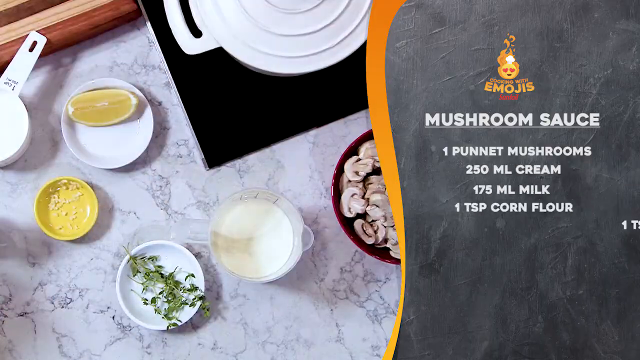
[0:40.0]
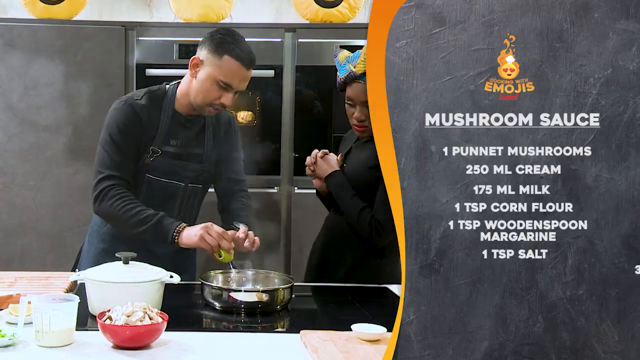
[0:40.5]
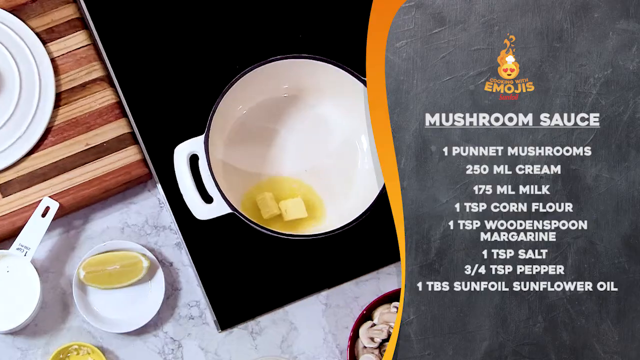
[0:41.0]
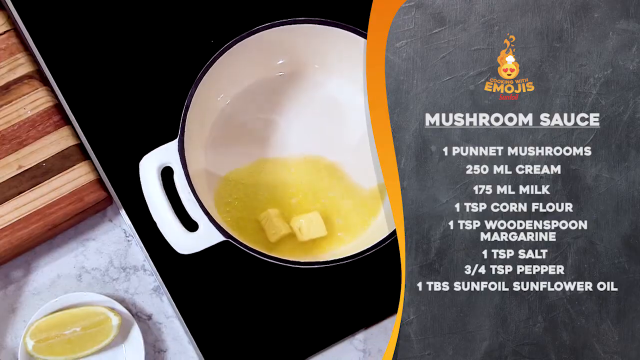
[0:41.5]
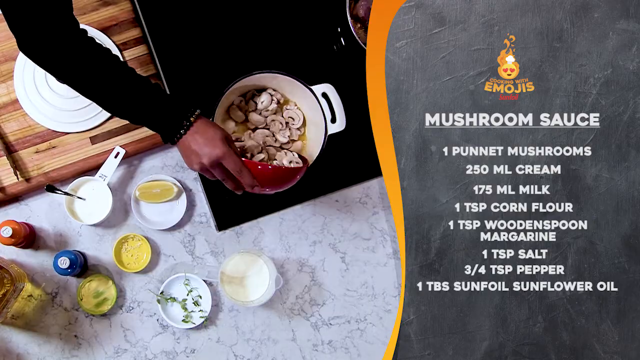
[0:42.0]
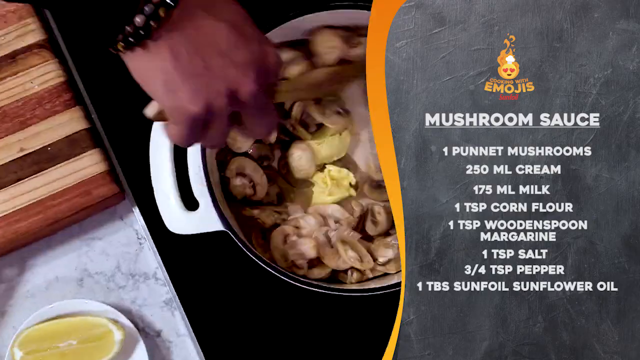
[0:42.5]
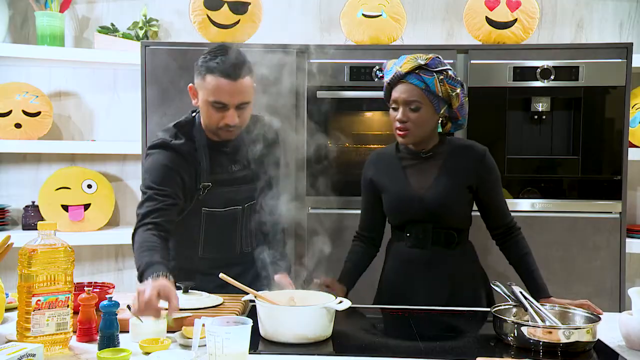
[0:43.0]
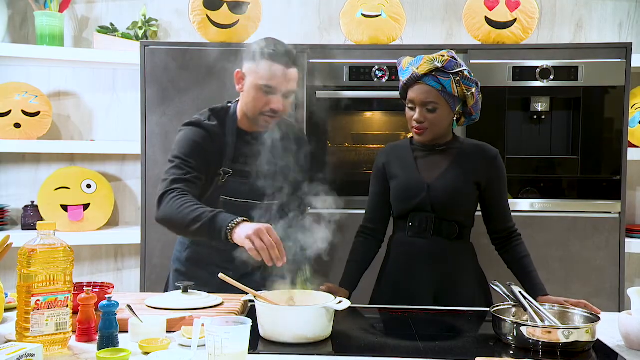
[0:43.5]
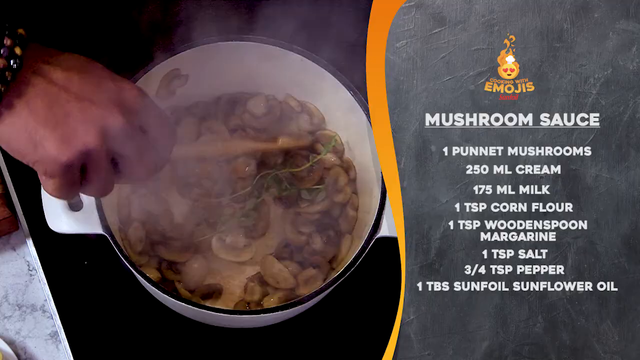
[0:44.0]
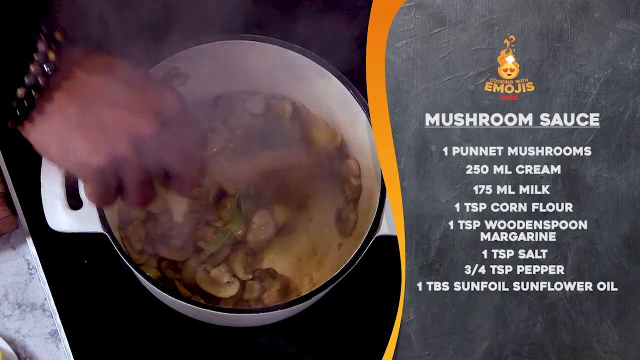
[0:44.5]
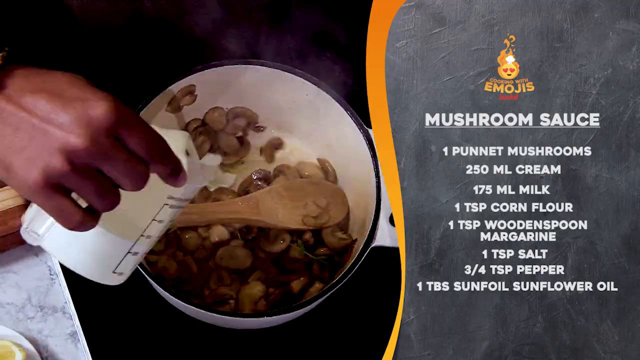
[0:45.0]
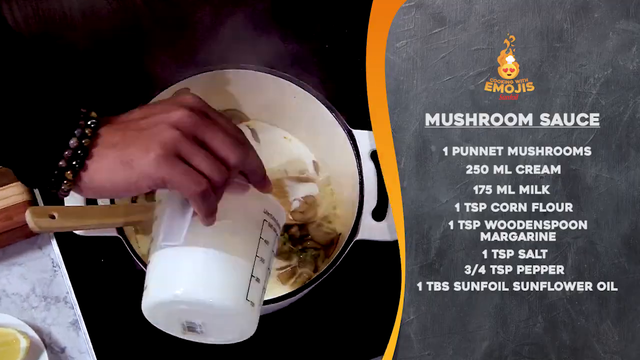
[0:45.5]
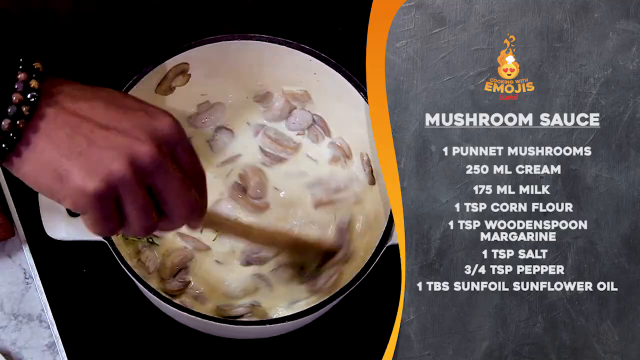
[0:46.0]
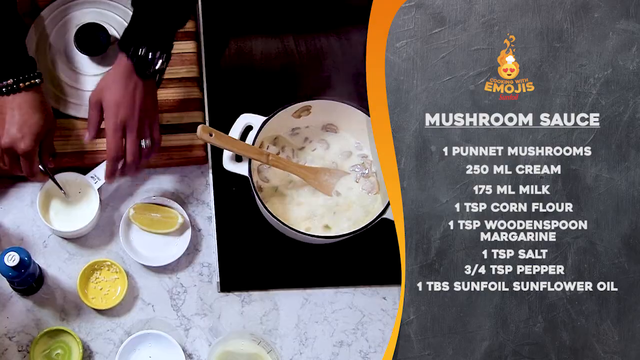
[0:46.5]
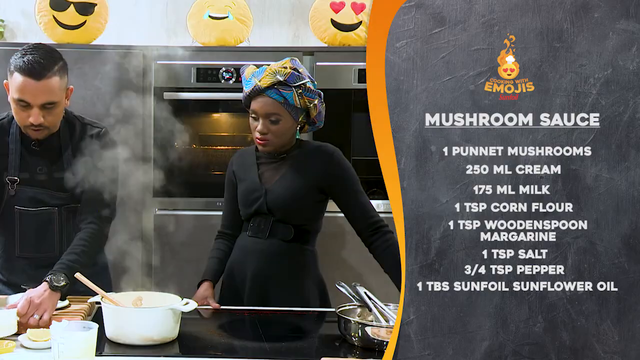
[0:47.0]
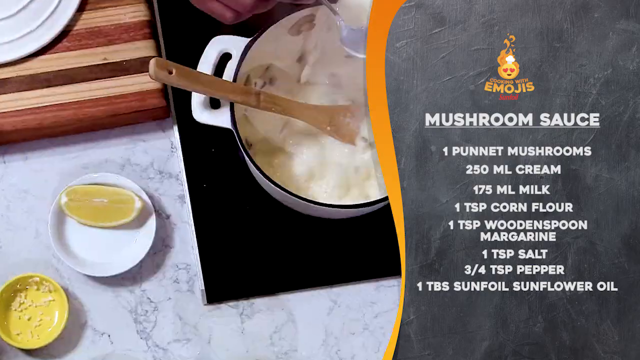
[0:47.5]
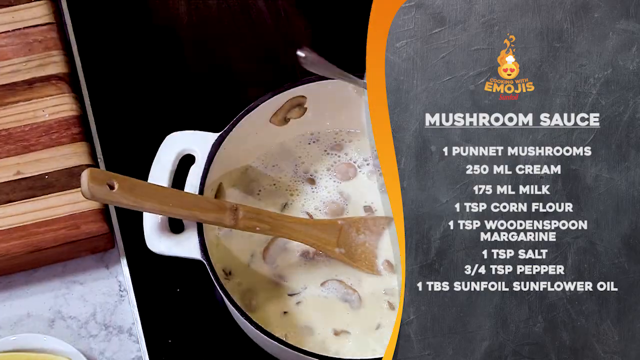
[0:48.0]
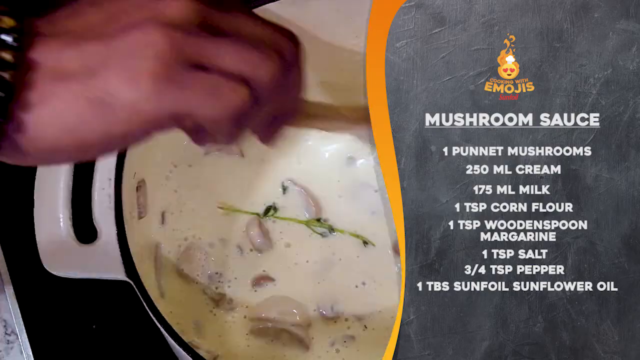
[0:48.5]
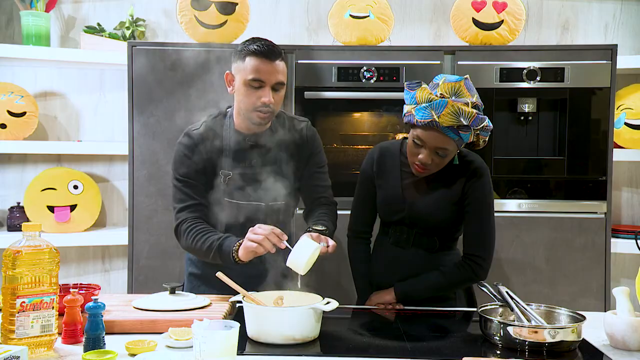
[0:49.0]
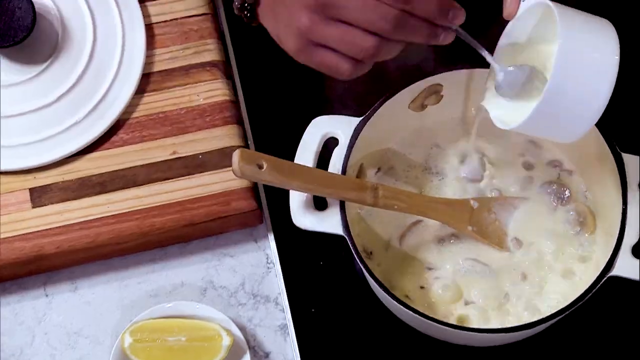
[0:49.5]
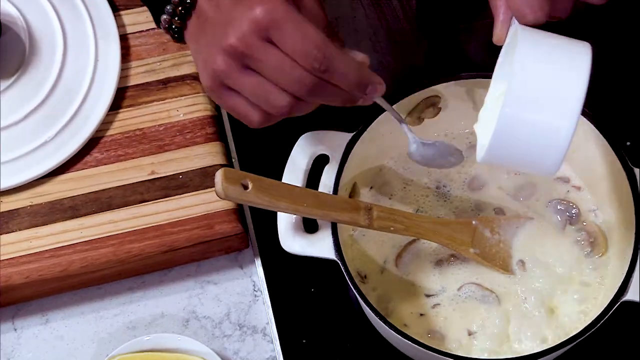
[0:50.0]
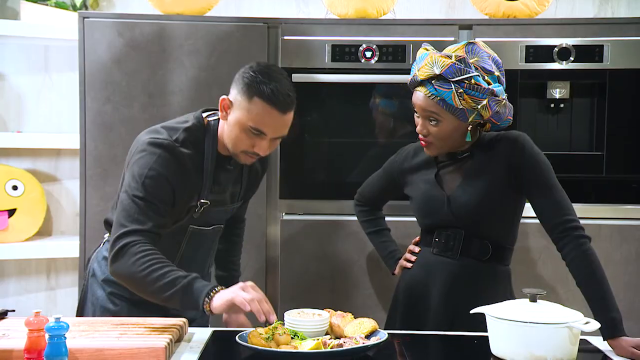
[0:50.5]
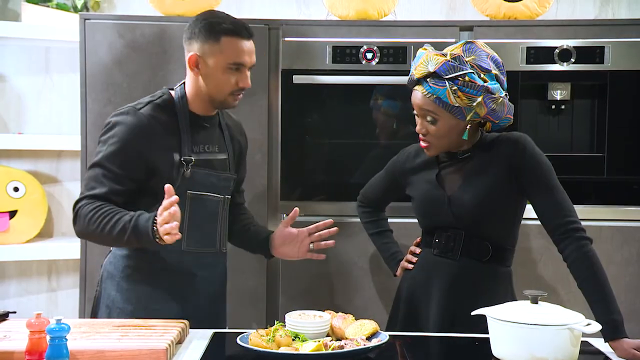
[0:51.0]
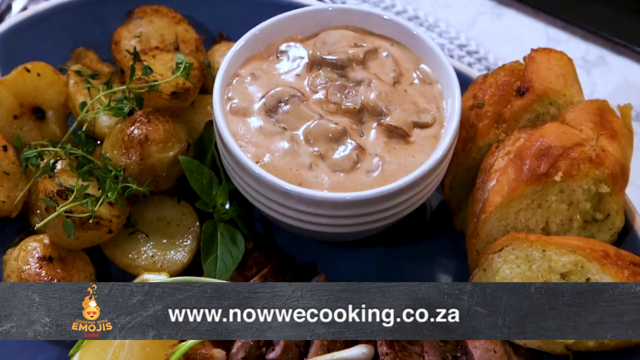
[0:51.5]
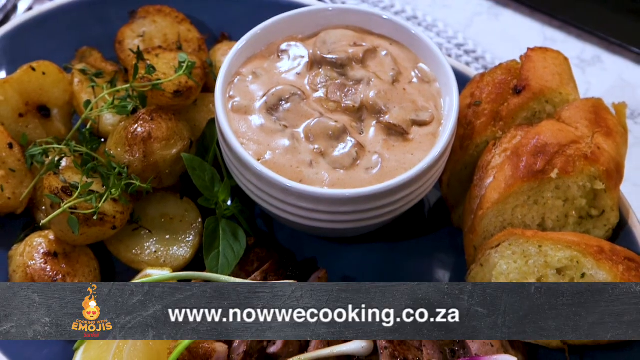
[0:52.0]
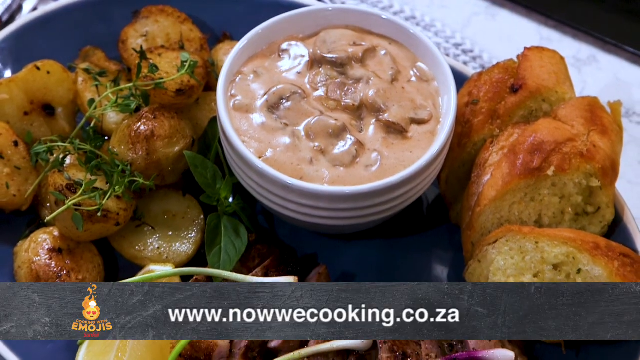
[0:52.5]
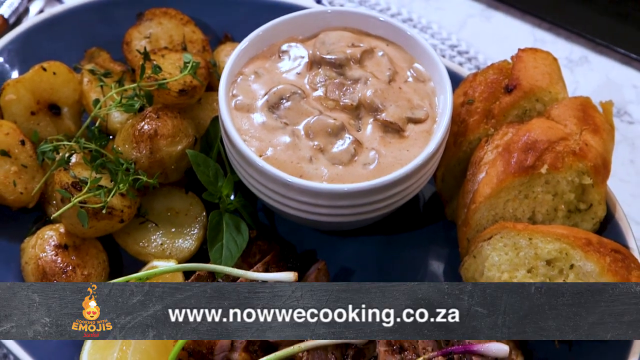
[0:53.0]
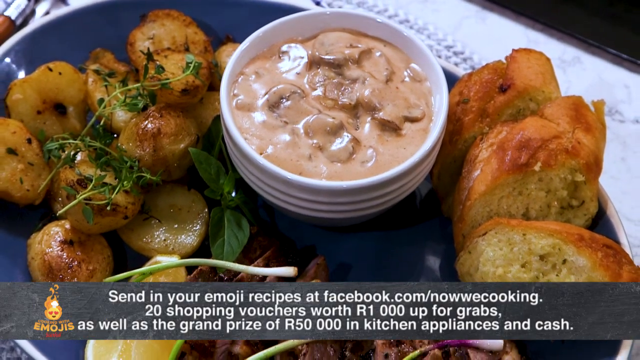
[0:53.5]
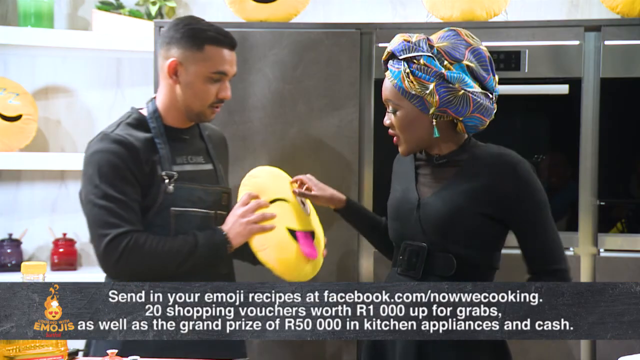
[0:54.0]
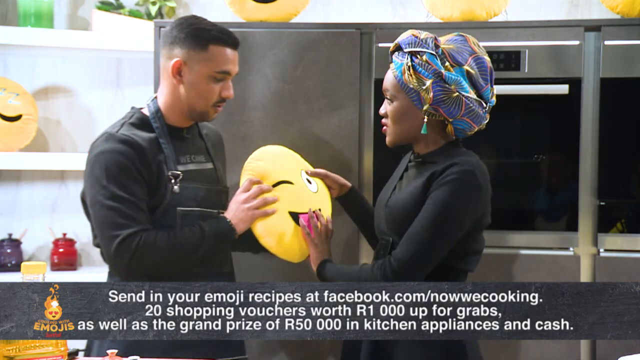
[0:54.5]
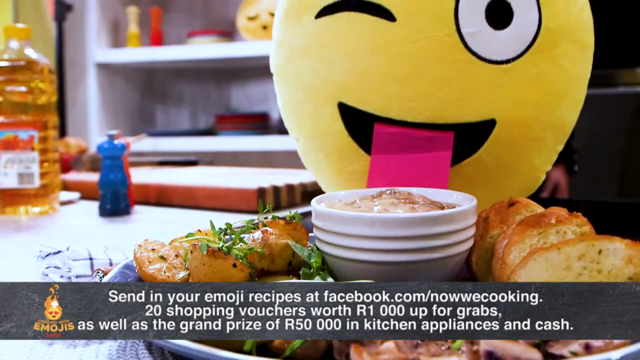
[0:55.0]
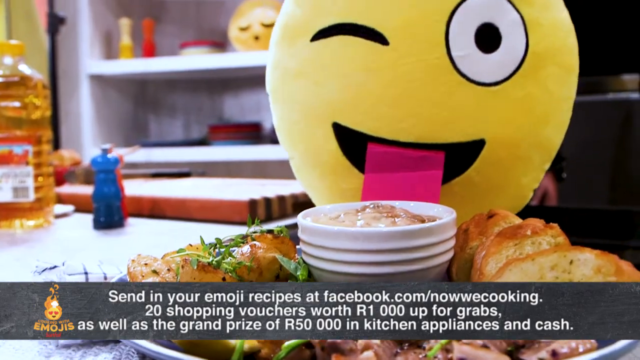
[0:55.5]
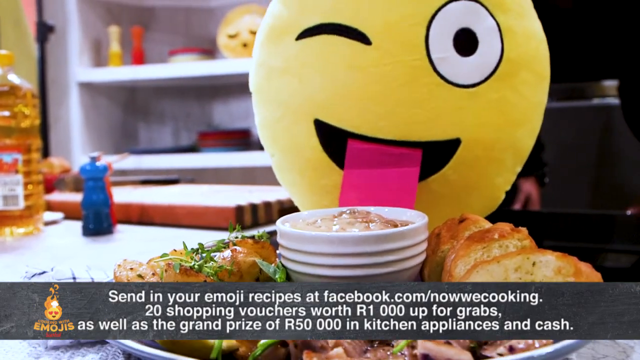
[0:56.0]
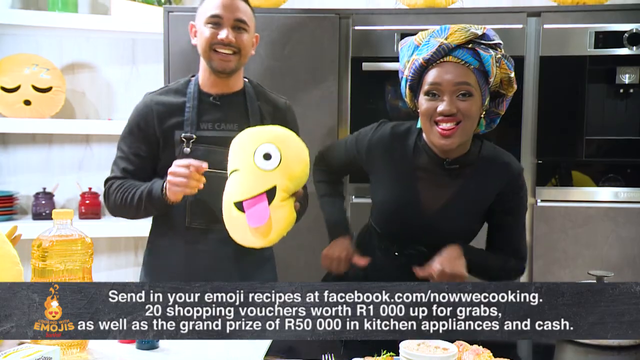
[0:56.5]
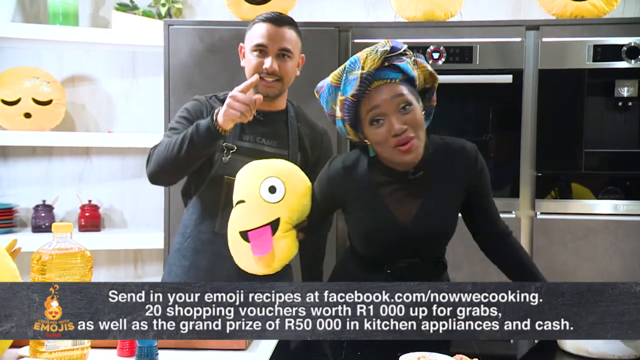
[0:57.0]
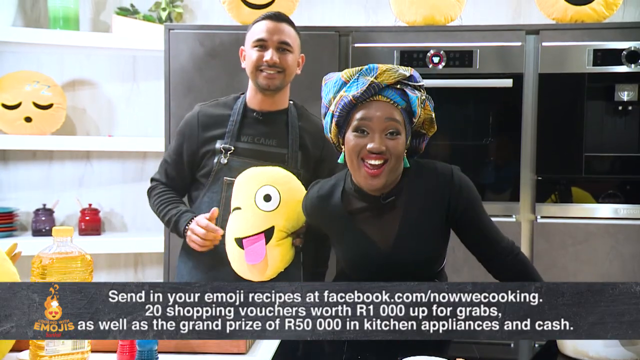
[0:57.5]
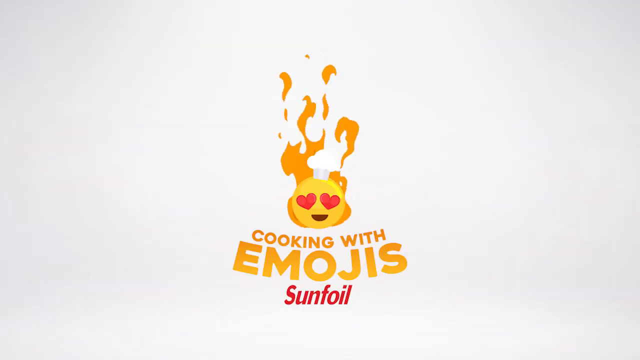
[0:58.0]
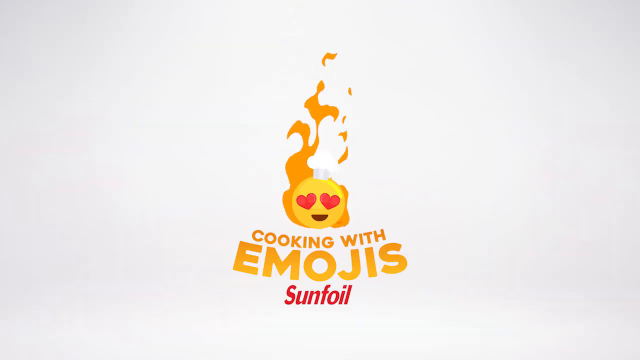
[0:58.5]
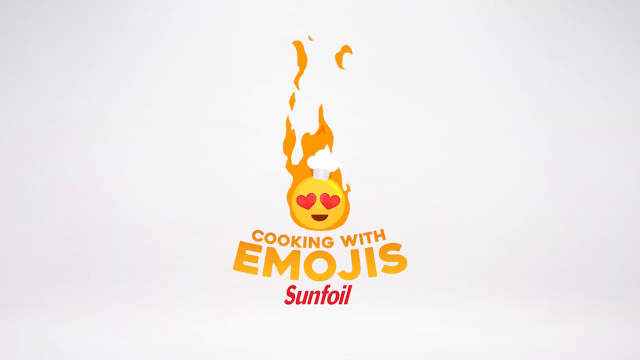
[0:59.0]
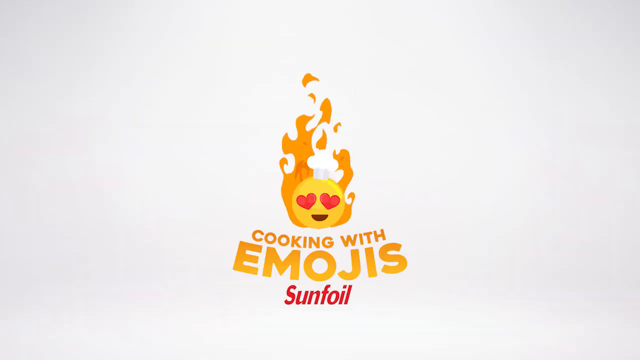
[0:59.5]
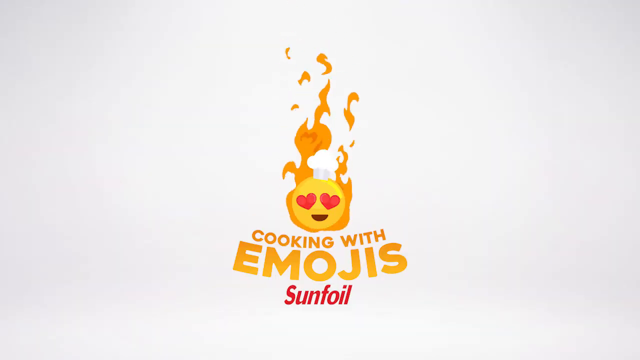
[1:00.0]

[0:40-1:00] The mushroom sauce is next. There is a little white pot on the stove with what looks like two tablespoons of butter in it. The recipe says "one punnet of mushrooms, 250 milliliters of cream, 175 milliliters of milk, one teaspoon of cornflour" and "one teaspoon of salt, three quarters teaspoon of pepper, and a tablespoon of sunflower oil". The man uses his right hand to put spices and foods into the pot, holding a bowl with his left hand and scooping other things in with his right. Then an emoji pillow with its tongue sticking out is used as a prop, held and moved back and forth. The man has his right hand on it while the woman puts her left hand on it, and they both just hold the emoji pillow.